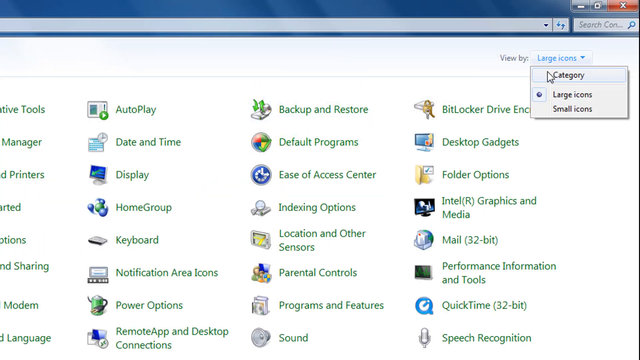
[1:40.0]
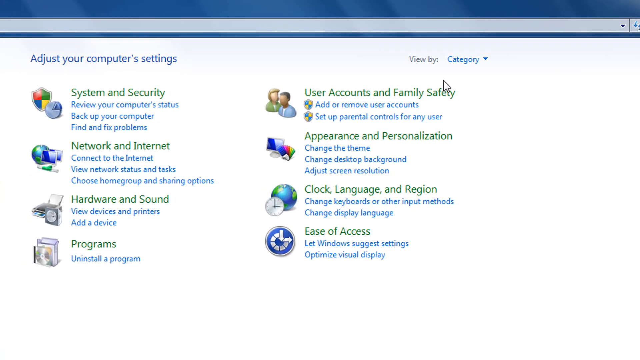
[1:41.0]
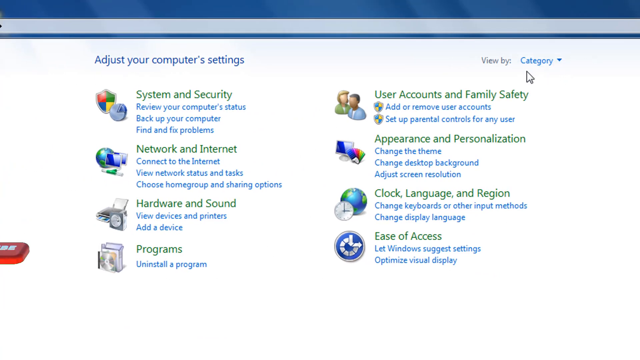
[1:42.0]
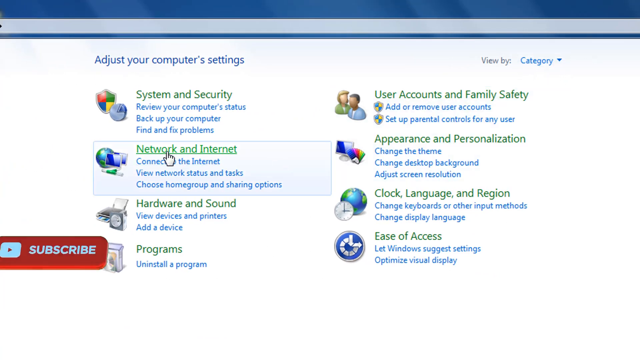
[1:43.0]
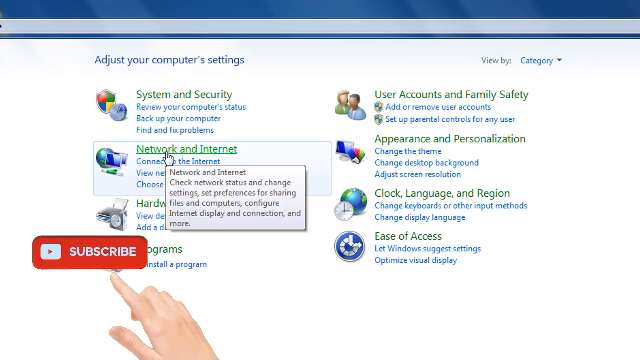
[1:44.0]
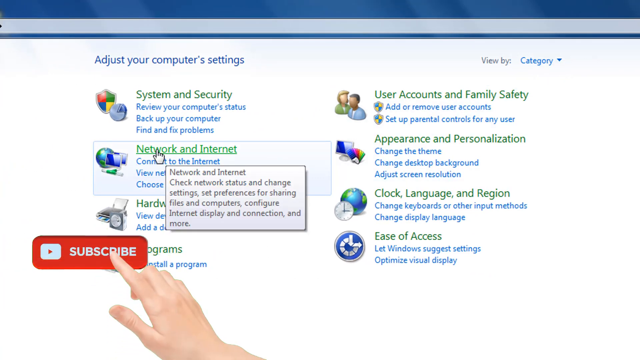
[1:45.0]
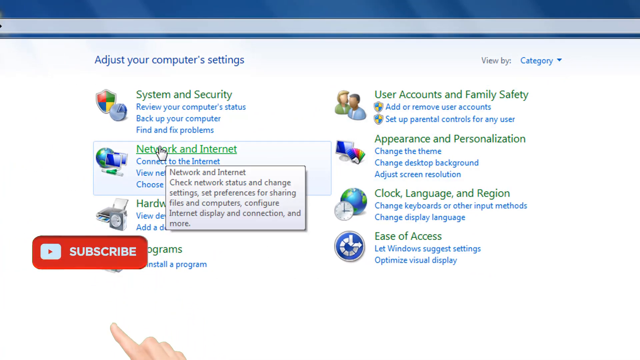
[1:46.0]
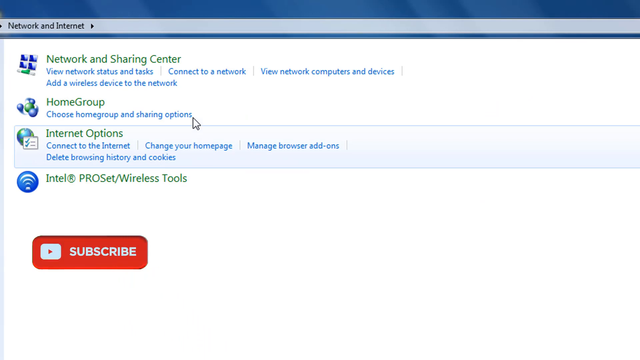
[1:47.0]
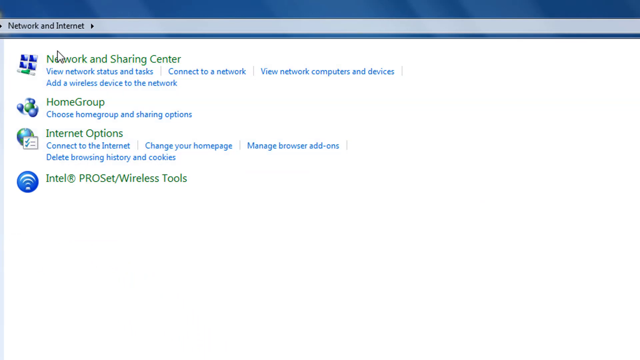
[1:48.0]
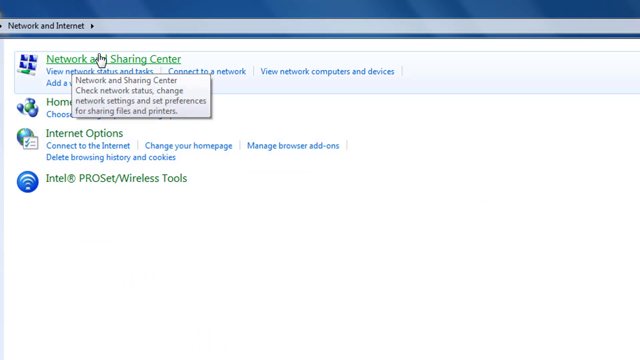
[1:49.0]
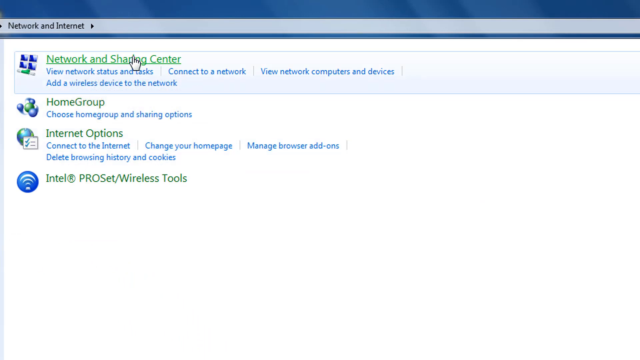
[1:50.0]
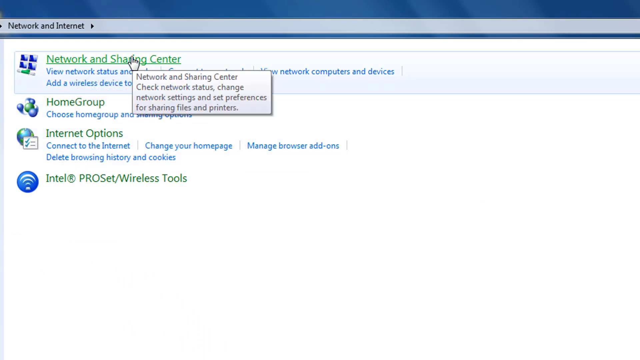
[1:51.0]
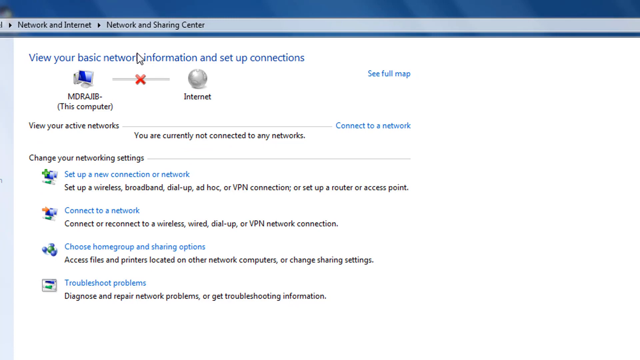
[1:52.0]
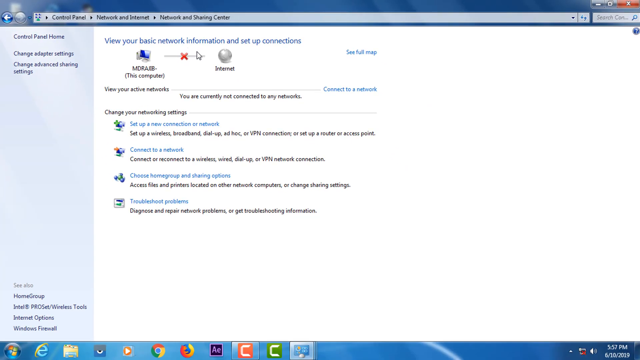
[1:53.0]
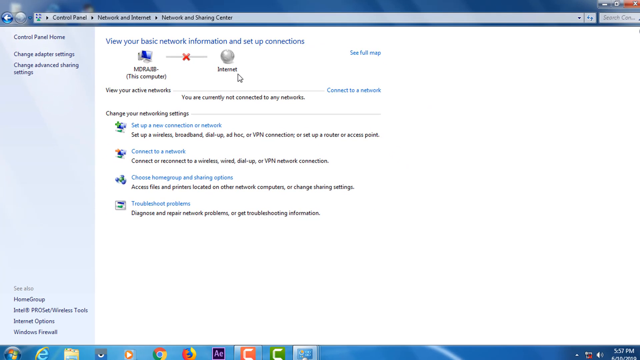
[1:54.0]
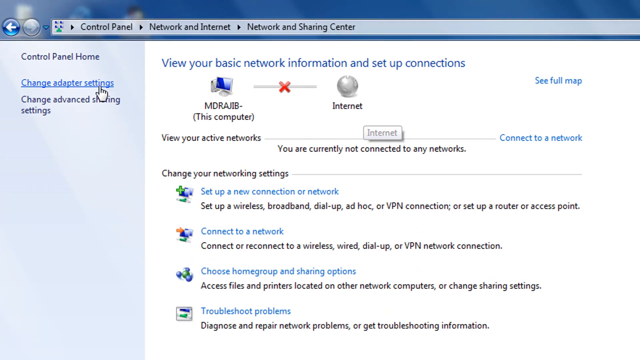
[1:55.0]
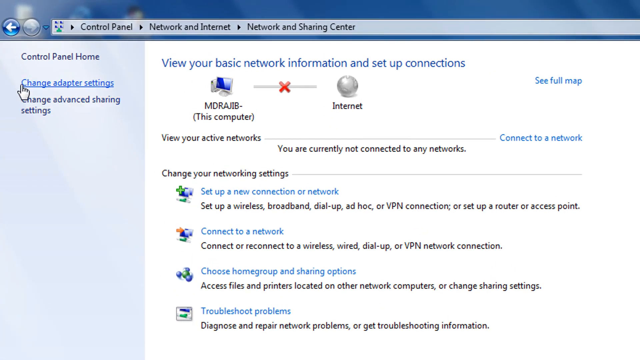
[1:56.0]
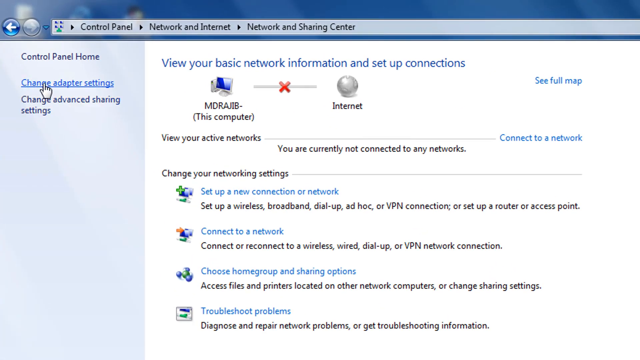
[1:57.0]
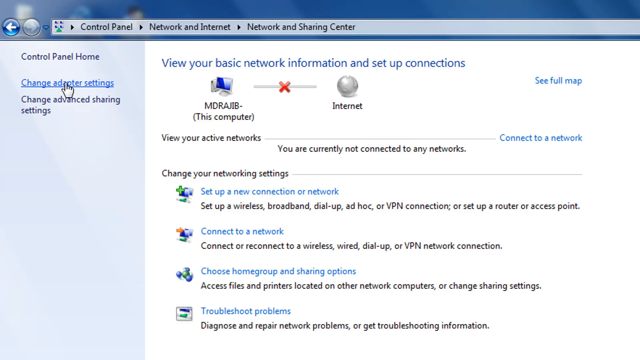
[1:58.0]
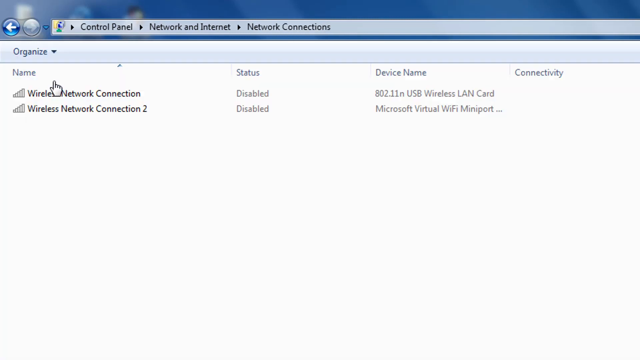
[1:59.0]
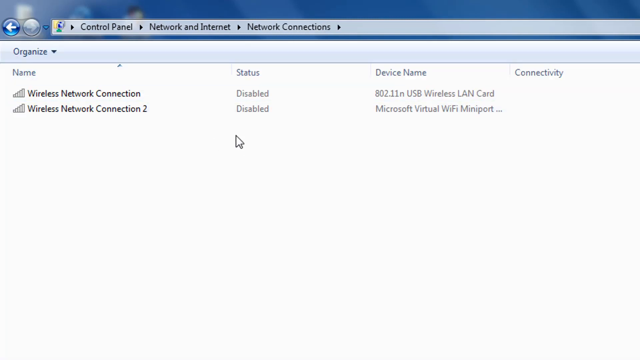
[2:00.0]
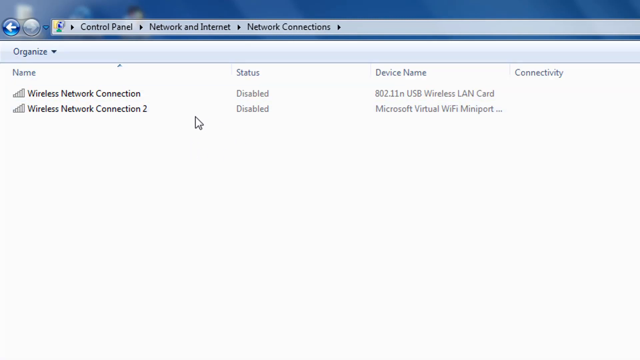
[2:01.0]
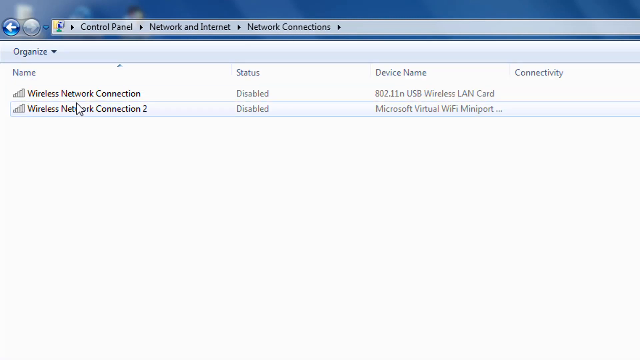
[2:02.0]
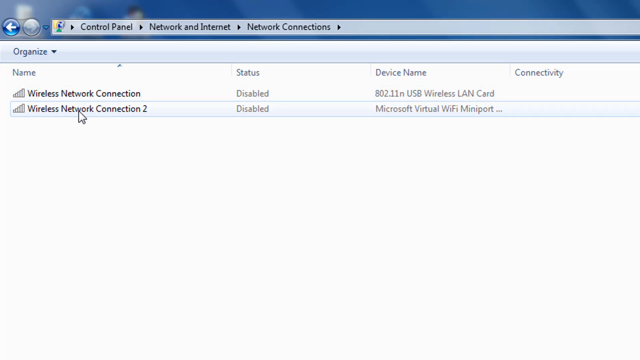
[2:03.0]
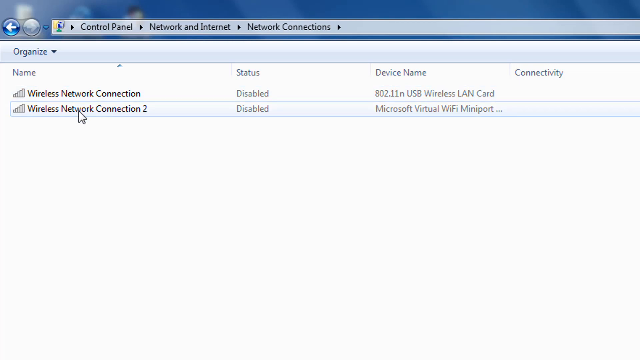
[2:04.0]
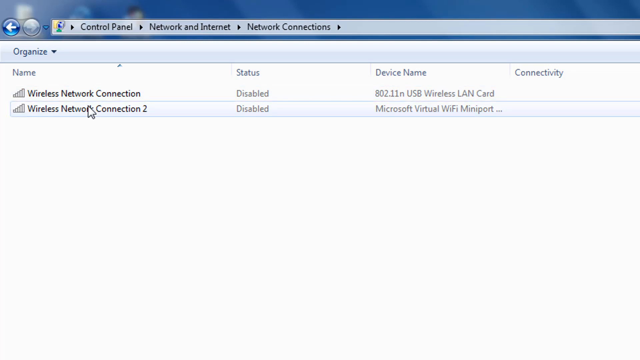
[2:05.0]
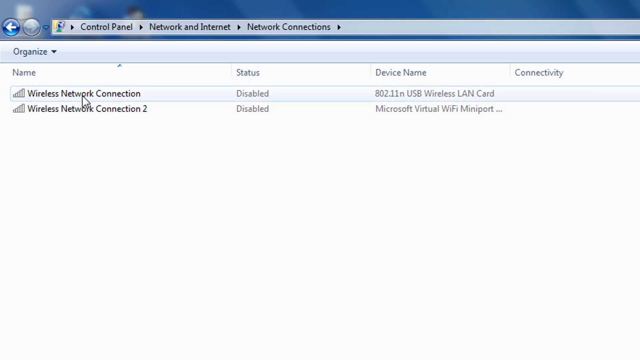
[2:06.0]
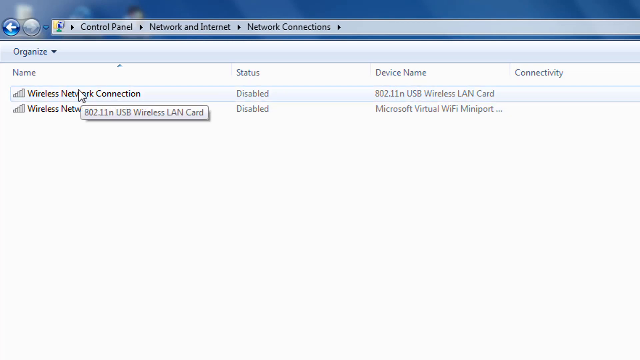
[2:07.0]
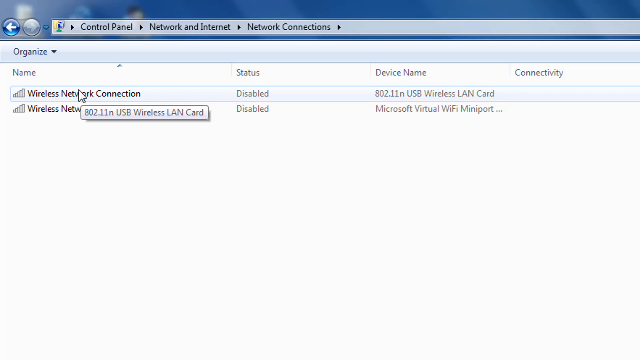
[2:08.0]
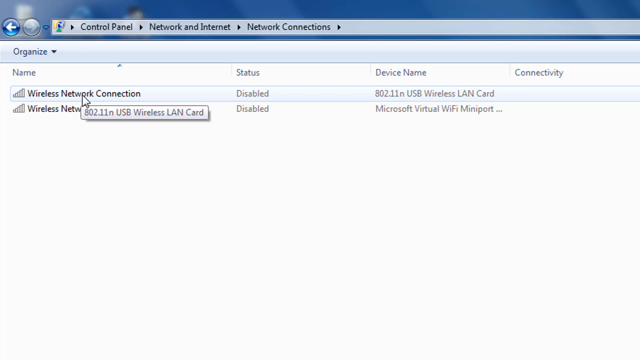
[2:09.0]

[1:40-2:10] With the Control Panel open, the user clicks the category button in the top right corner, then hovers the mouse over "network and internet," which is highlighted in green. Meanwhile, a red YouTube subscribe button pops up in the bottom left corner of the screen, with an animated hand that reaches up and touches it before dropping down out of sight, and the button moves off to the left and out of the screen. The user clicks the network and internet options, highlights "network and sharing center" with the mouse and clicks it. The screen says "view your basic network information and set up connections." The user clicks "change adapter settings" on the left-hand side of the screen, showing that wireless network connection and wireless network connection 2 both have a status of disabled. The user hovers the mouse over a network connection and right-clicks on it.